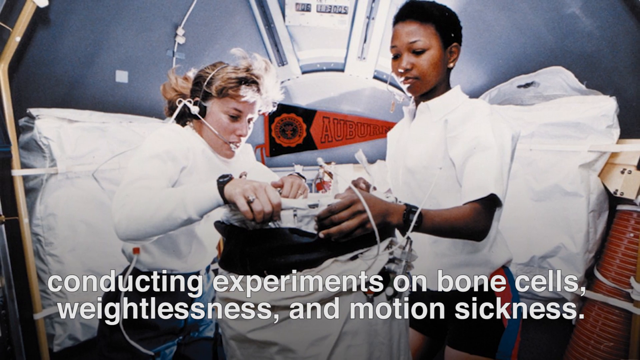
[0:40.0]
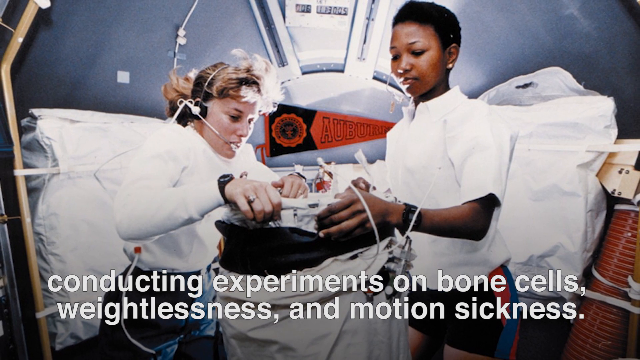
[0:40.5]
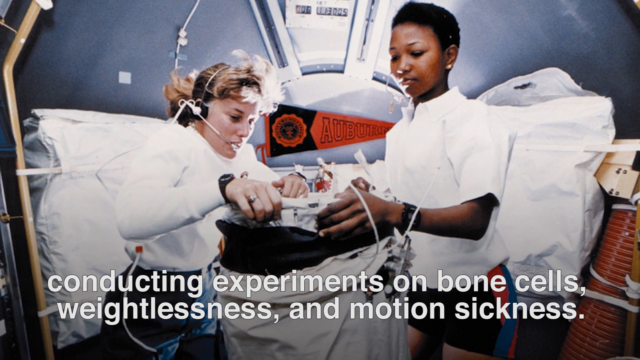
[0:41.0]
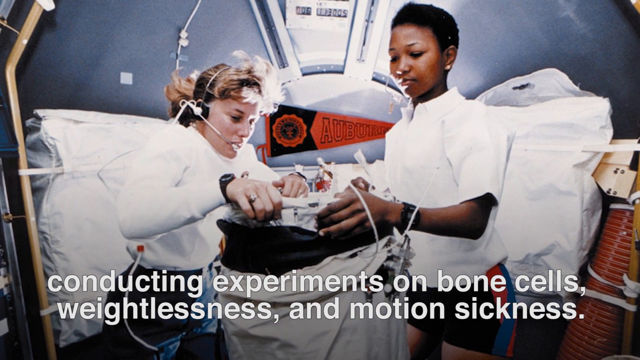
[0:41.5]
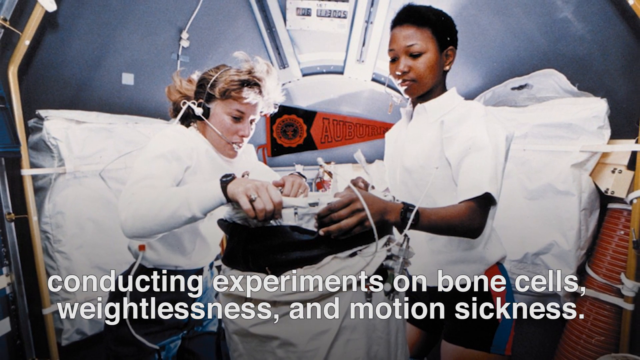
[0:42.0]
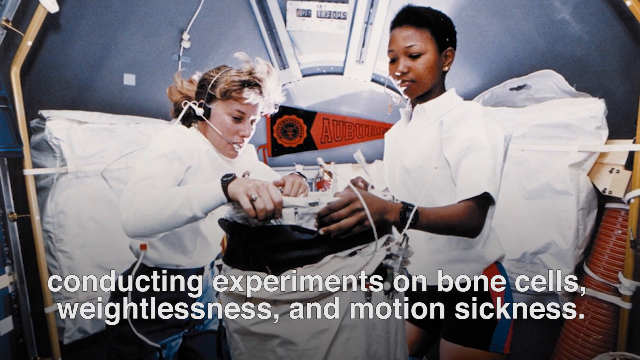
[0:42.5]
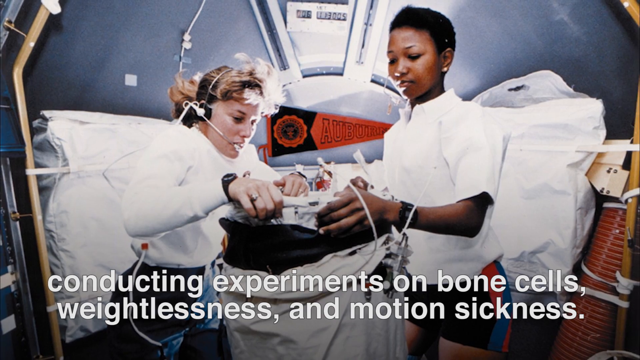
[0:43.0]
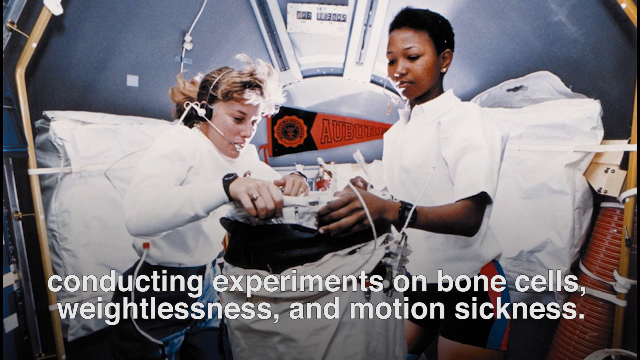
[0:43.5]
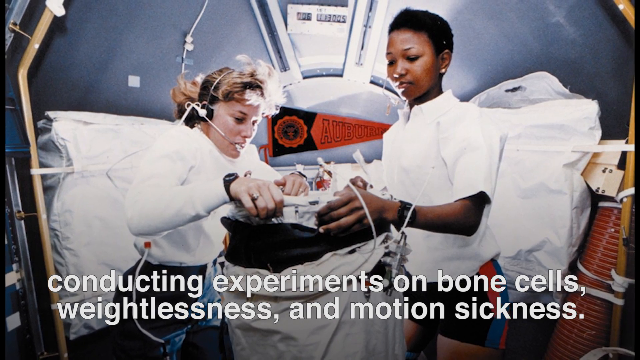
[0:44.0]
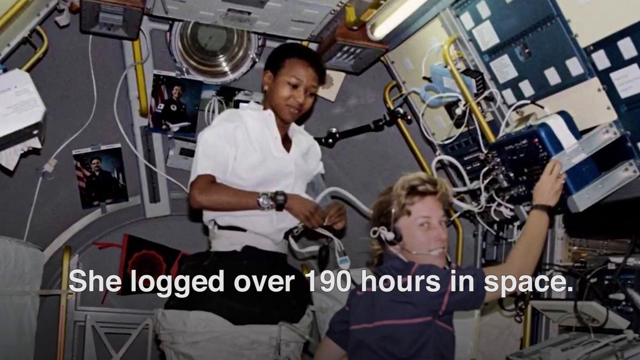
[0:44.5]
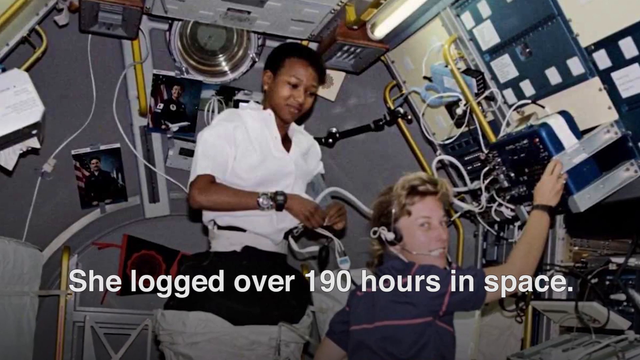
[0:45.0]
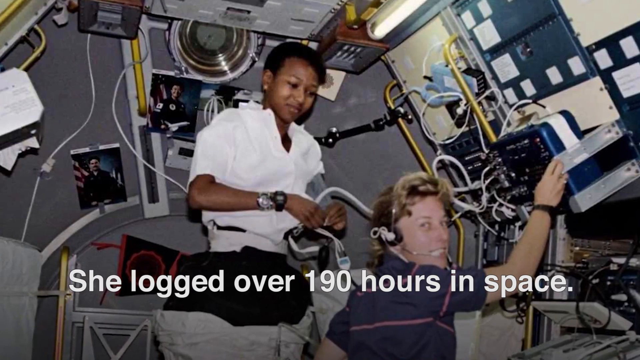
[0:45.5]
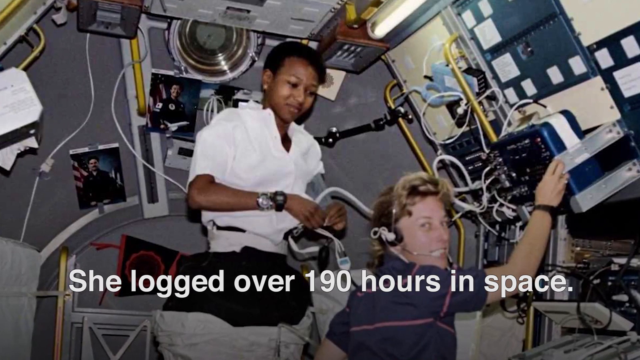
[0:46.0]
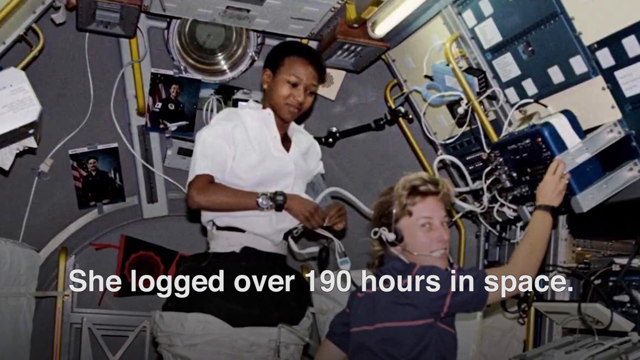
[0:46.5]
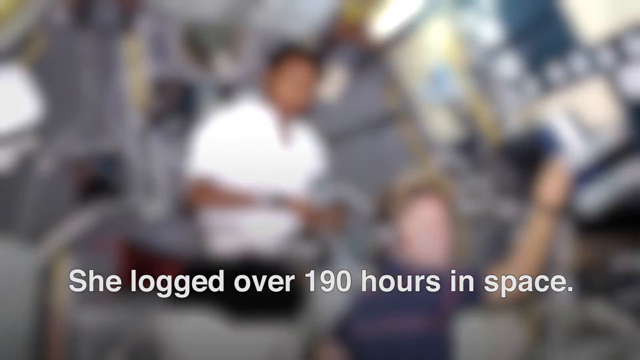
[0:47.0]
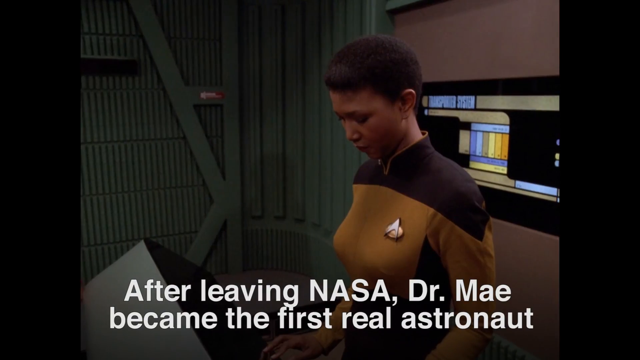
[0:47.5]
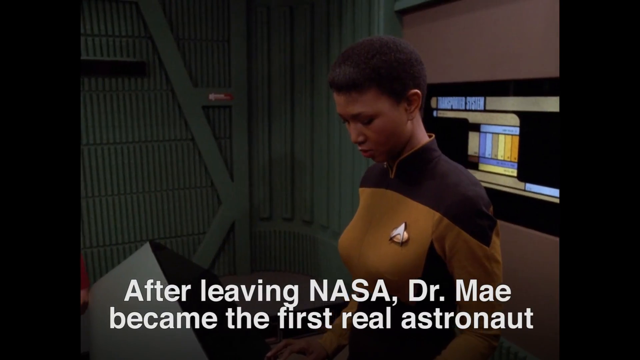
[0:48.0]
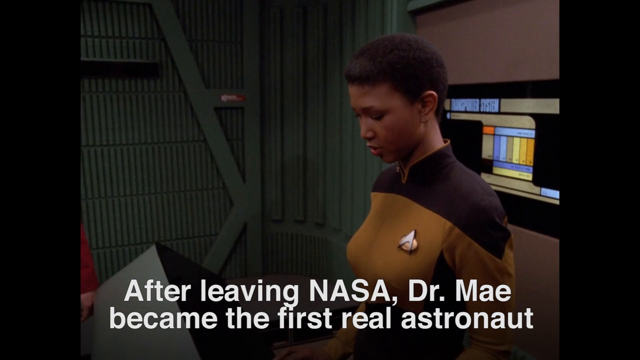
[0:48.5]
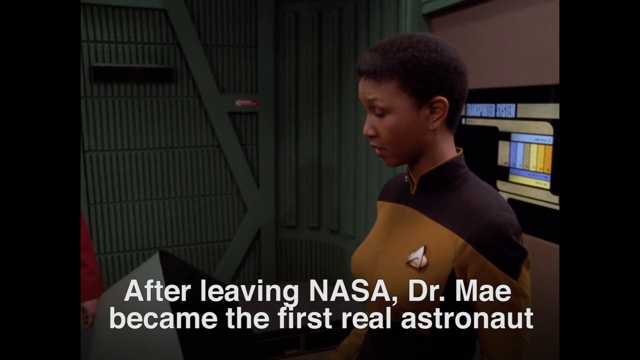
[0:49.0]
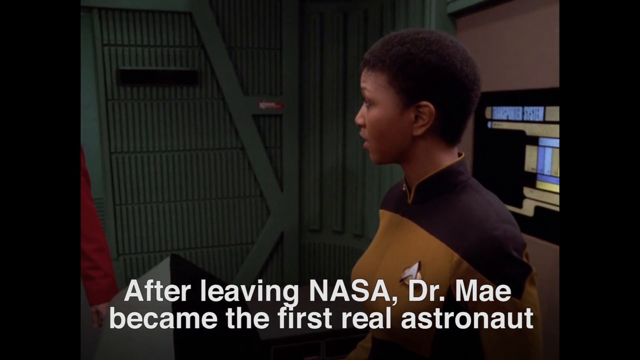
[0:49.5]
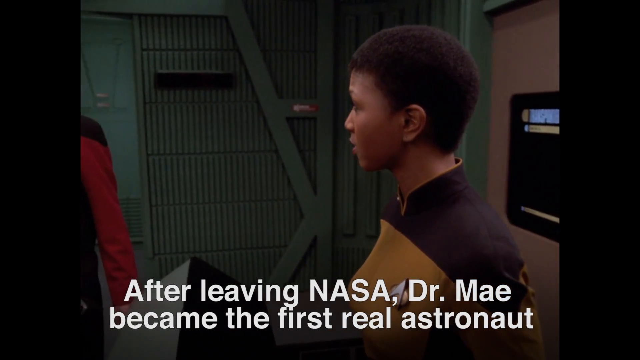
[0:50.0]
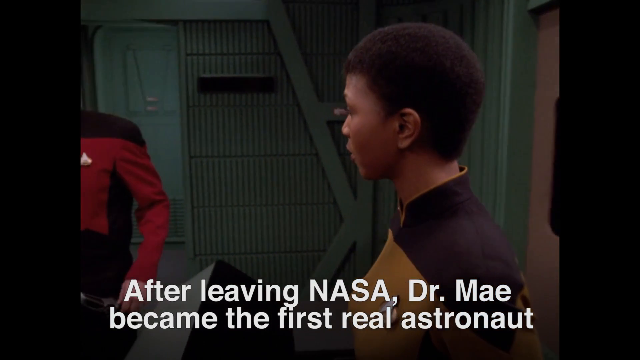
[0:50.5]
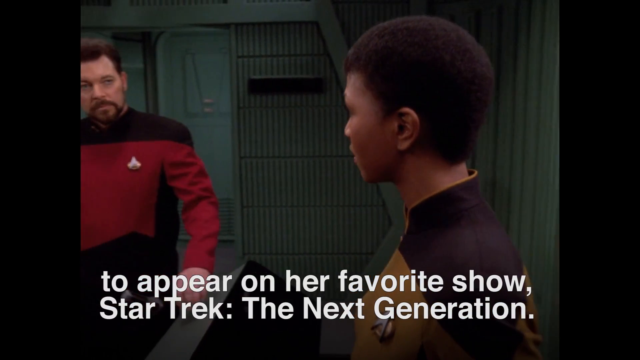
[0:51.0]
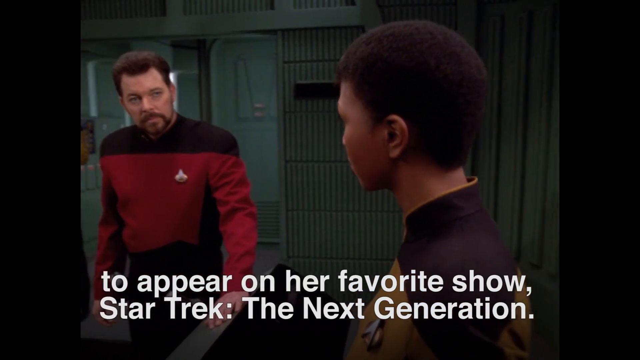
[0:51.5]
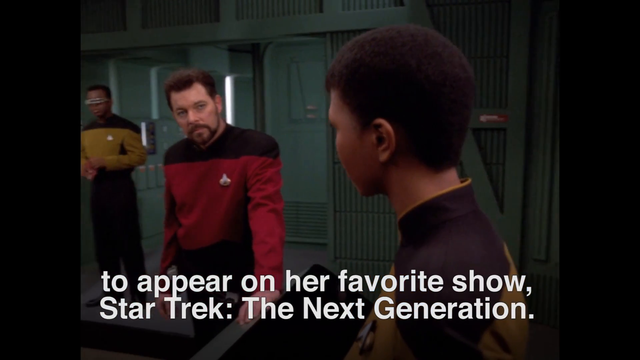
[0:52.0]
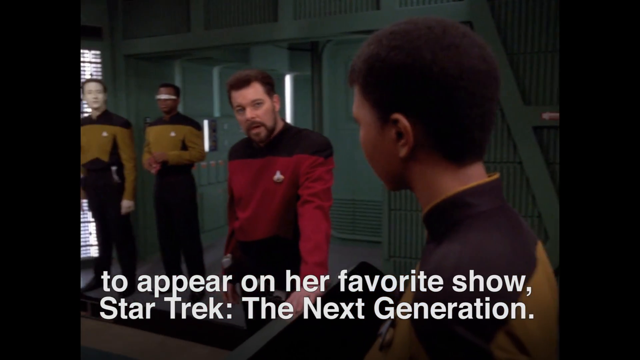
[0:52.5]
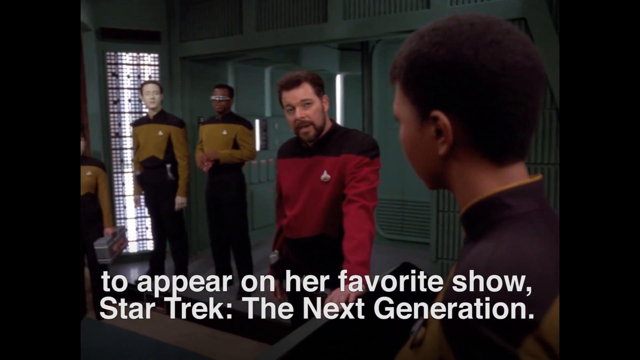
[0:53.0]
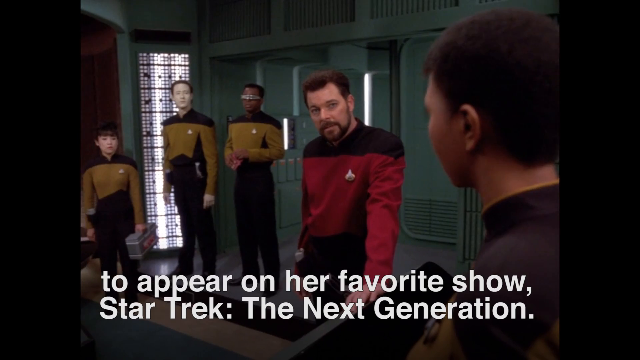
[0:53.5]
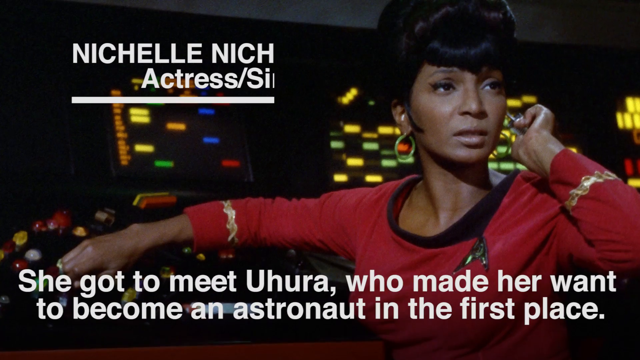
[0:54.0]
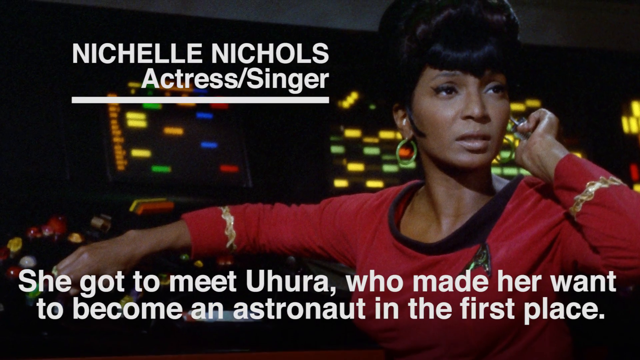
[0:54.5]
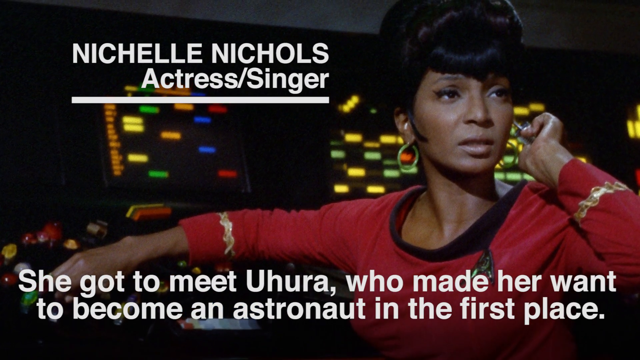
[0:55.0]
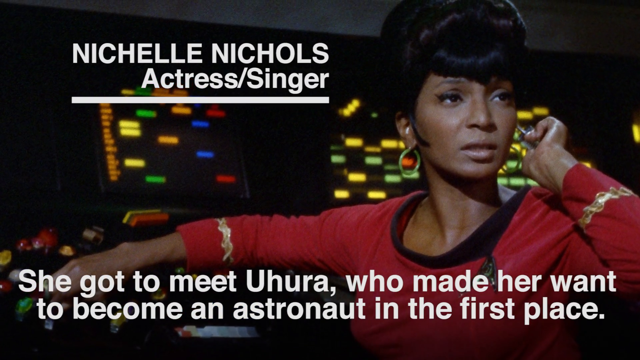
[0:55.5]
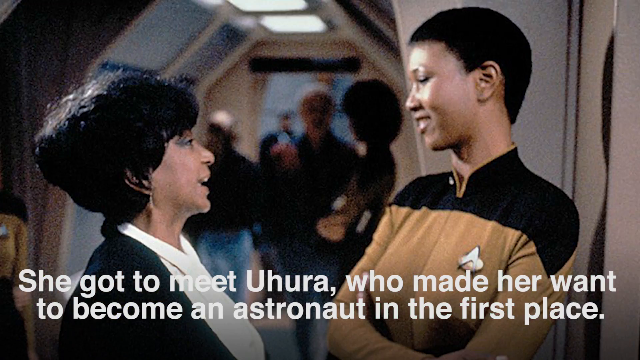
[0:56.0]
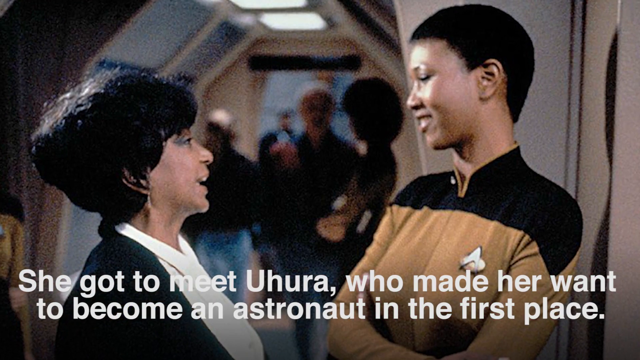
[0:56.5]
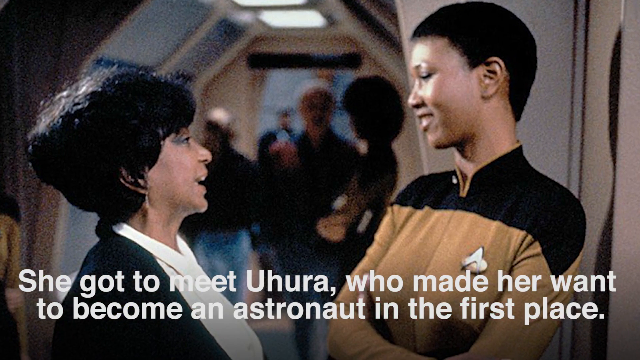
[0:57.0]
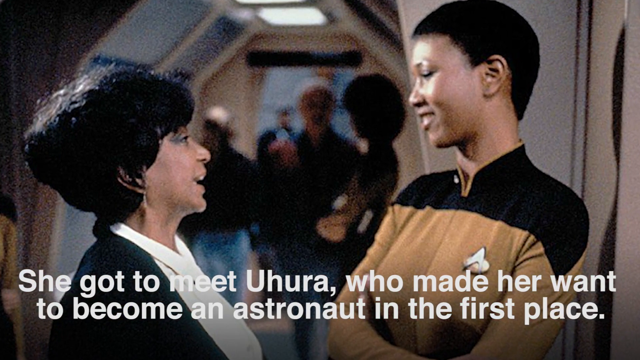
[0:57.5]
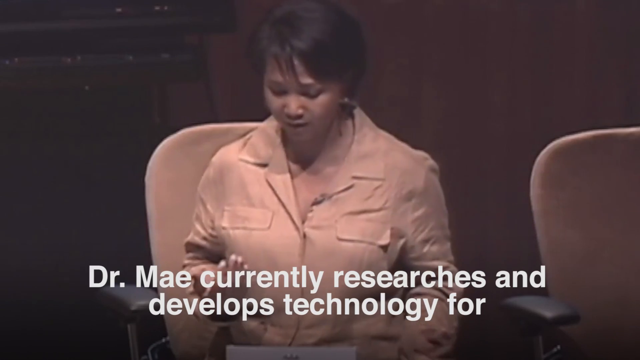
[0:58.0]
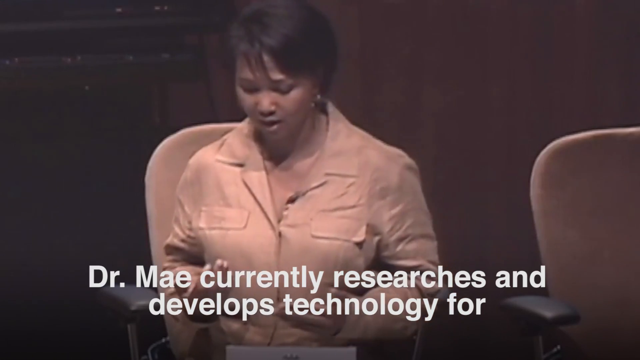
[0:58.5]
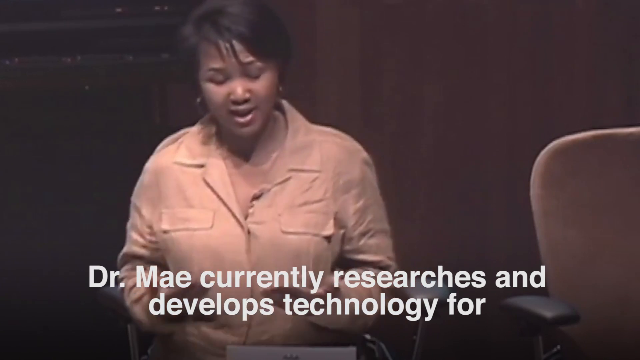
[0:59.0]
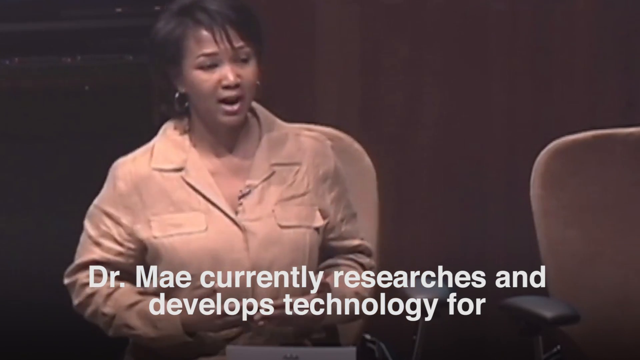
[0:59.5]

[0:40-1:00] The video continues with her experiments on bone cells, weightlessness and motion sickness, and states that she logged about 119 hours. Dr. May became the first real astronaut to appear on her favorite show, Star Trek The Next Generation. Dr. May currently researches and develops technology.